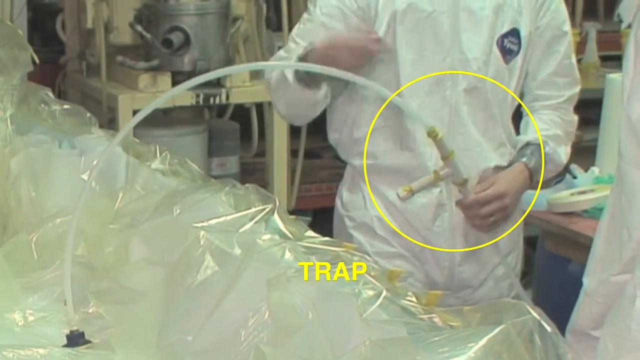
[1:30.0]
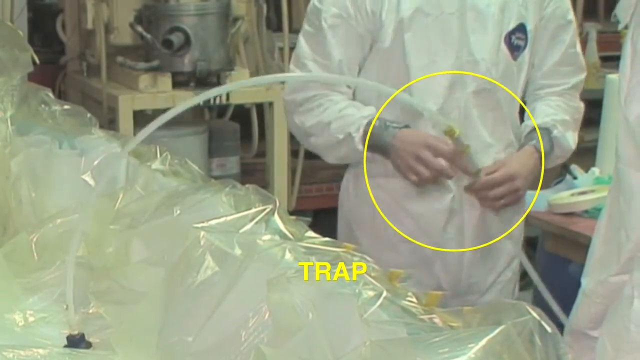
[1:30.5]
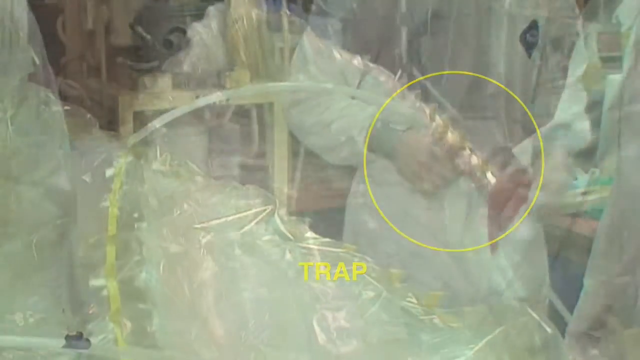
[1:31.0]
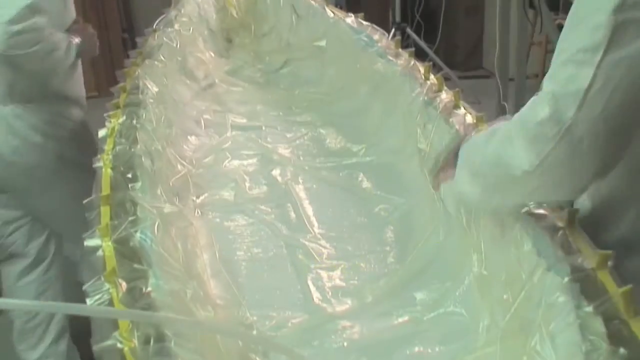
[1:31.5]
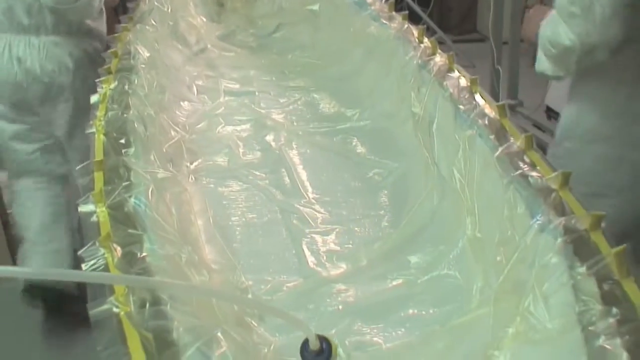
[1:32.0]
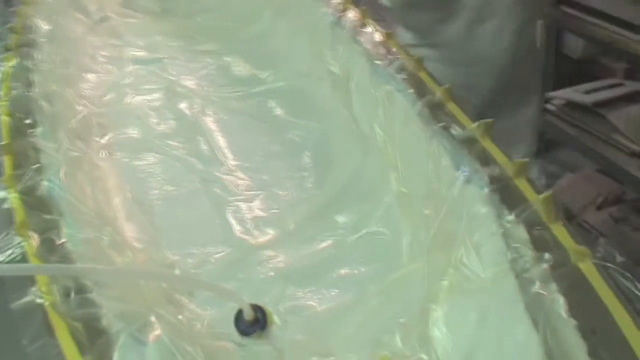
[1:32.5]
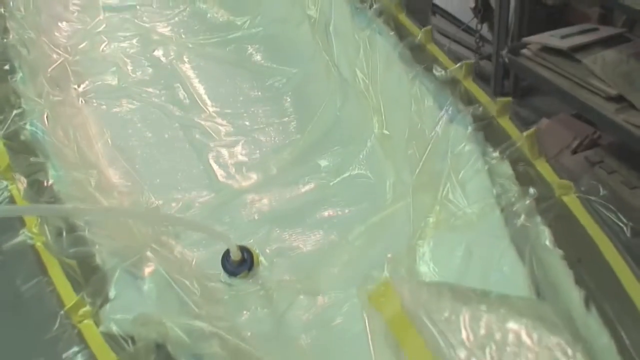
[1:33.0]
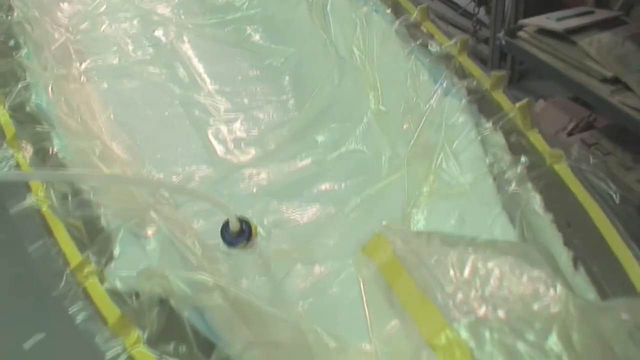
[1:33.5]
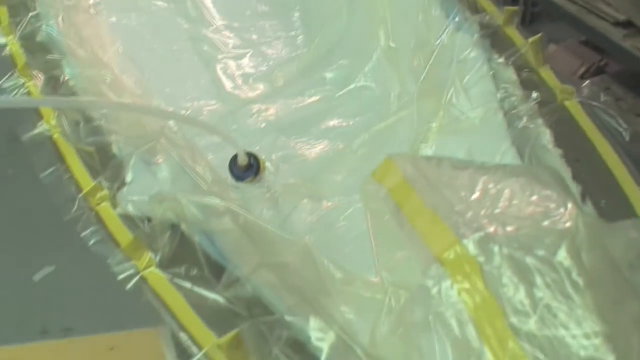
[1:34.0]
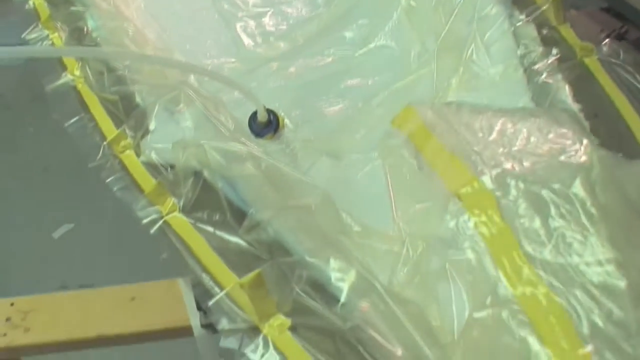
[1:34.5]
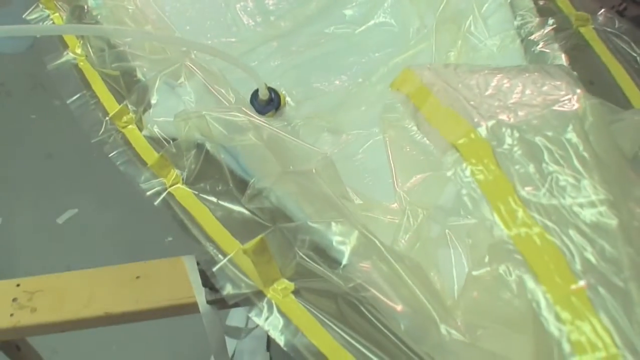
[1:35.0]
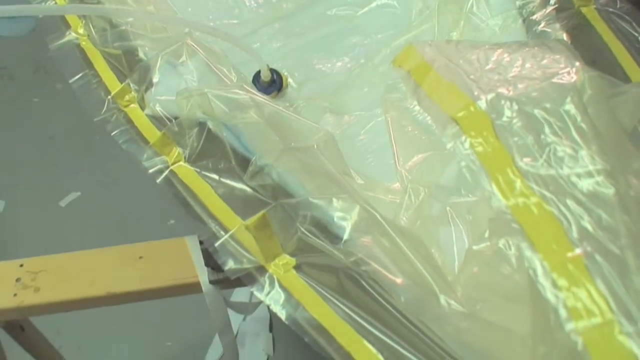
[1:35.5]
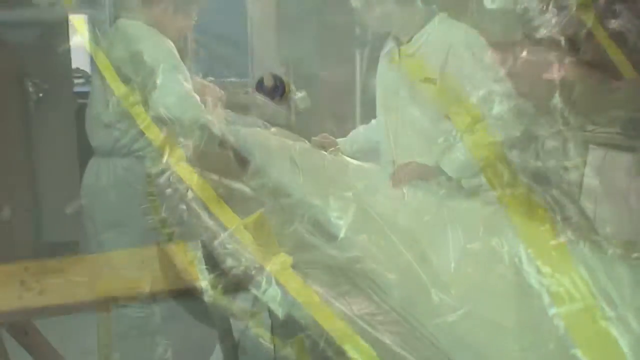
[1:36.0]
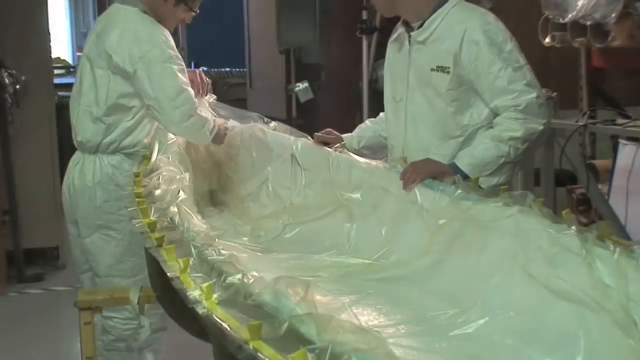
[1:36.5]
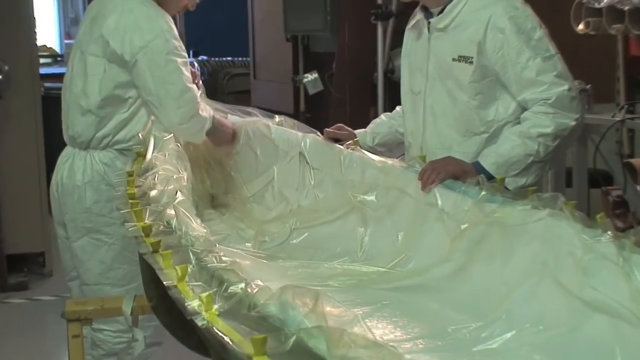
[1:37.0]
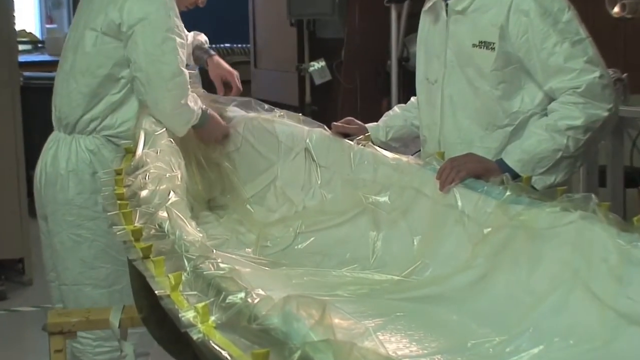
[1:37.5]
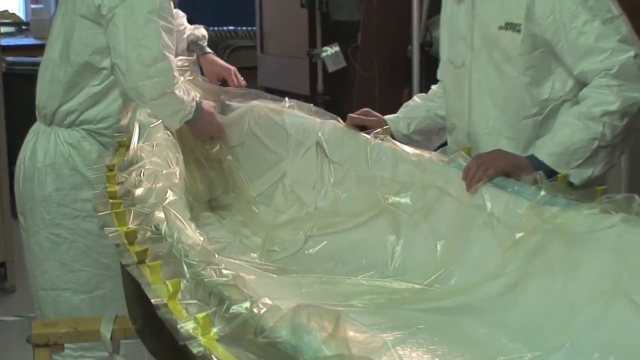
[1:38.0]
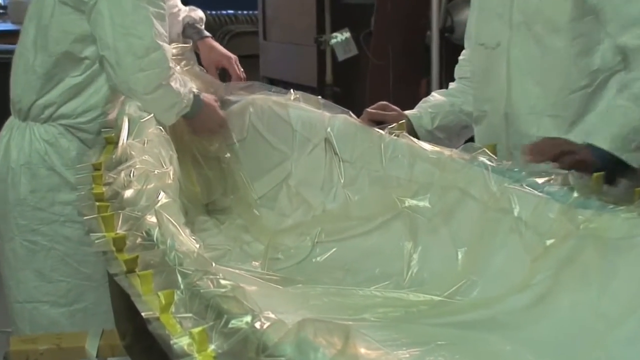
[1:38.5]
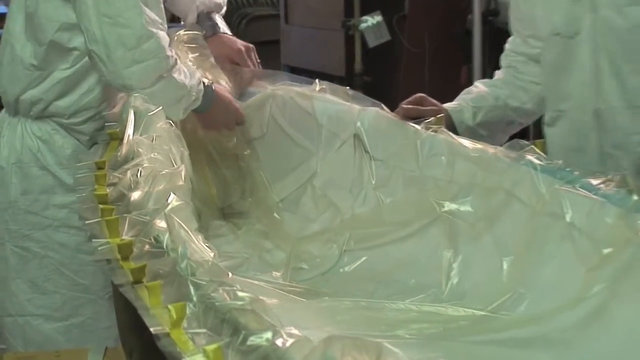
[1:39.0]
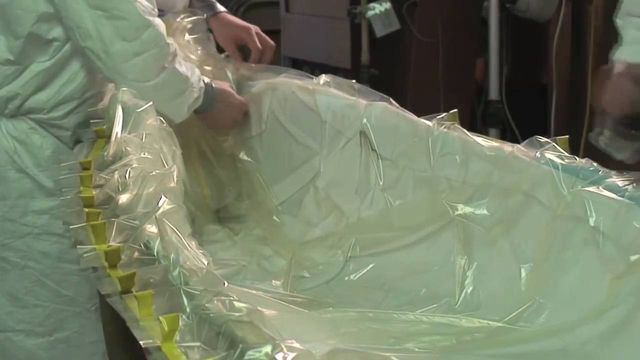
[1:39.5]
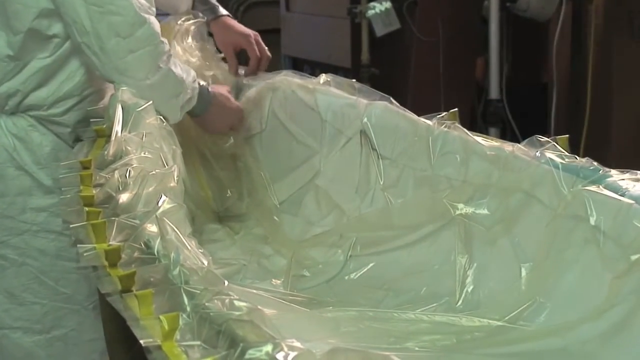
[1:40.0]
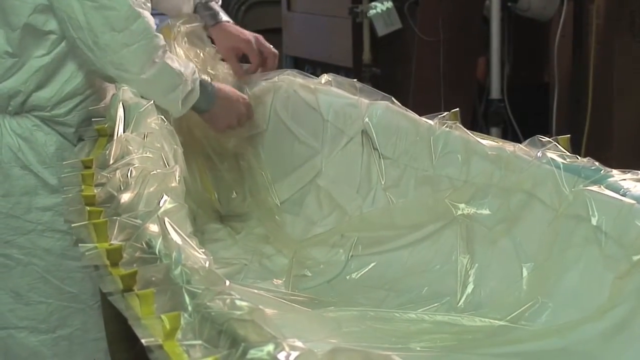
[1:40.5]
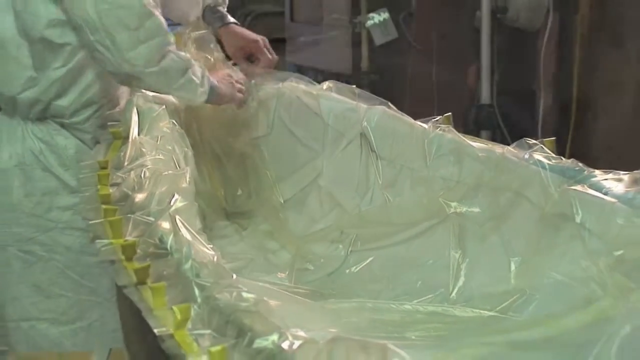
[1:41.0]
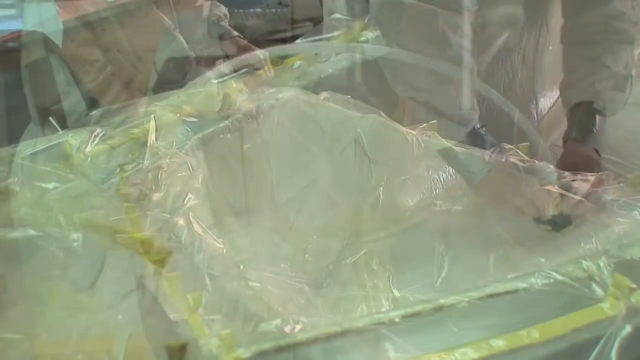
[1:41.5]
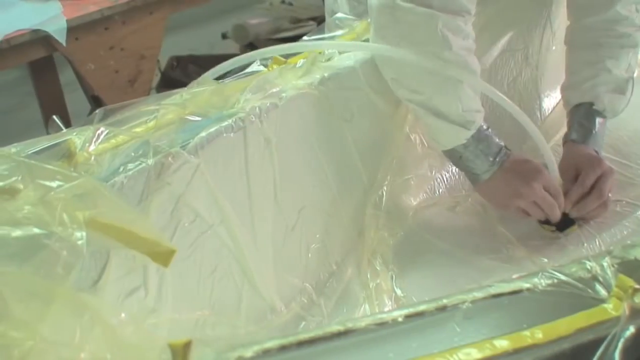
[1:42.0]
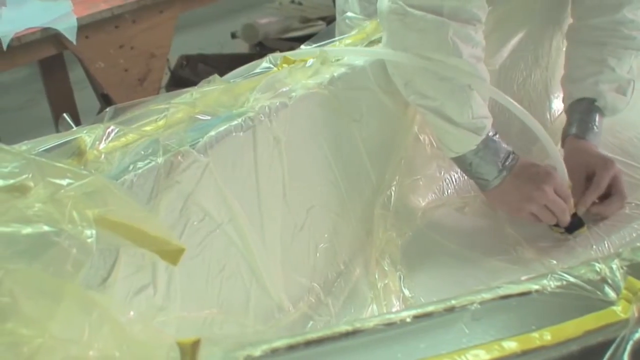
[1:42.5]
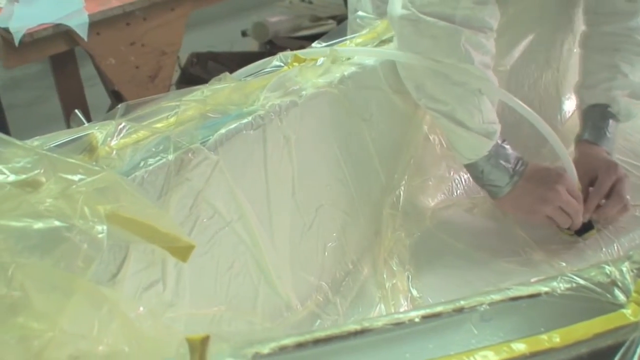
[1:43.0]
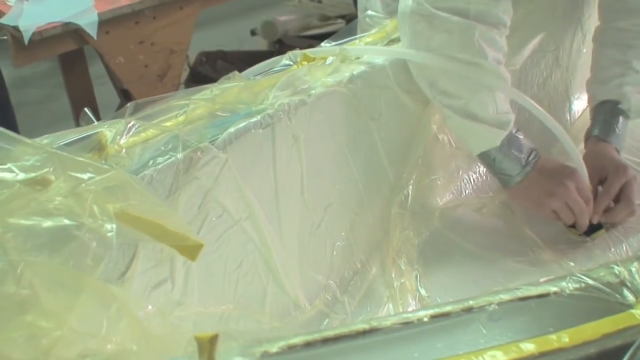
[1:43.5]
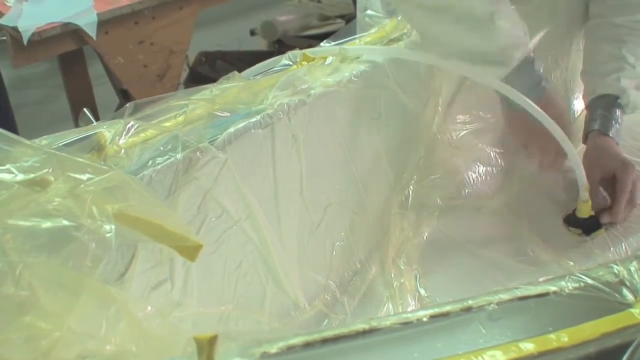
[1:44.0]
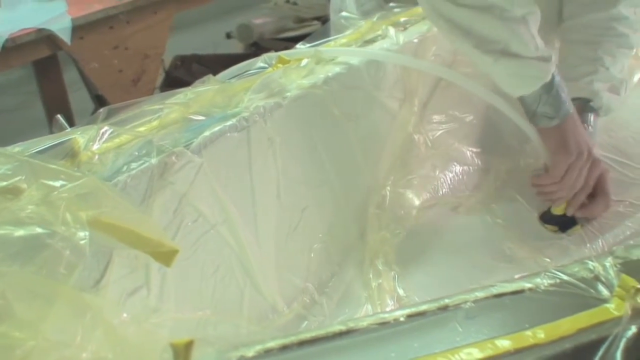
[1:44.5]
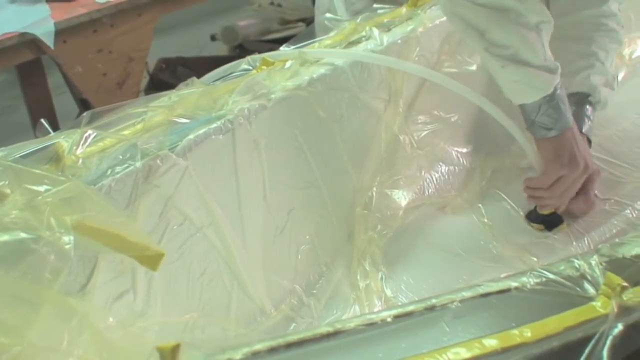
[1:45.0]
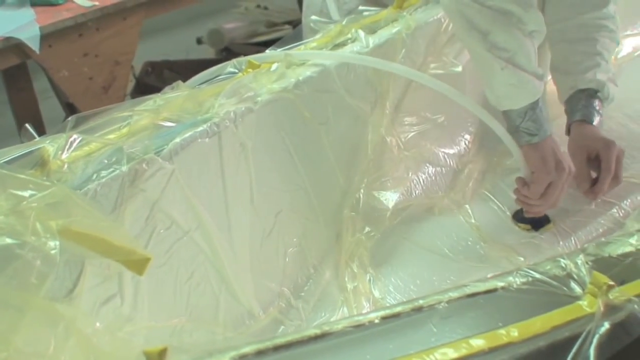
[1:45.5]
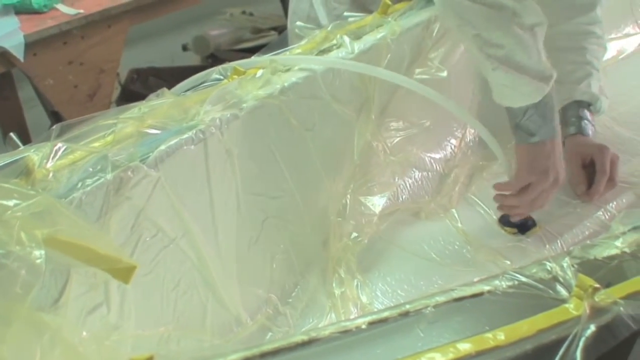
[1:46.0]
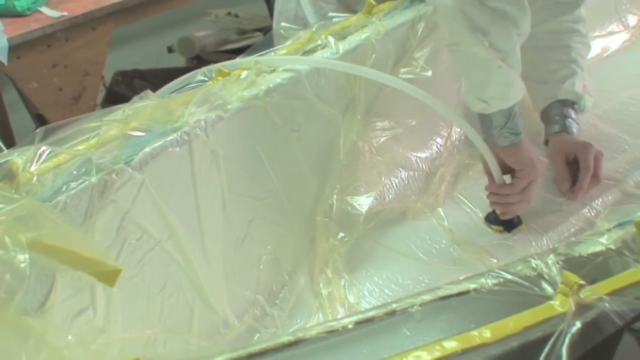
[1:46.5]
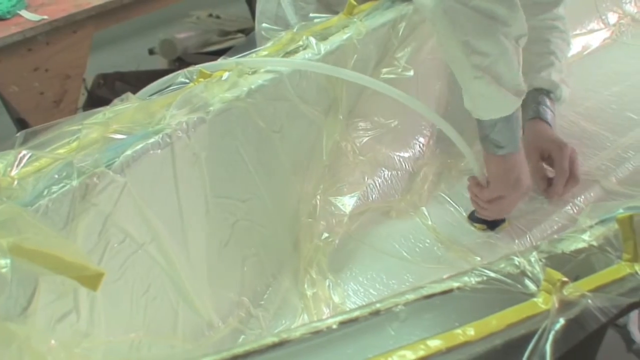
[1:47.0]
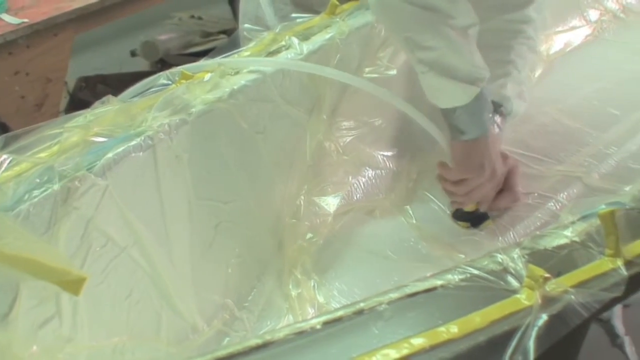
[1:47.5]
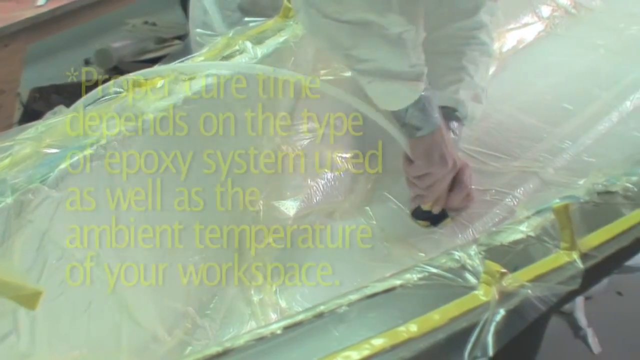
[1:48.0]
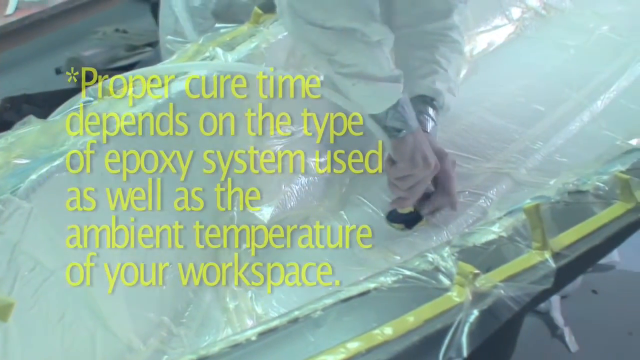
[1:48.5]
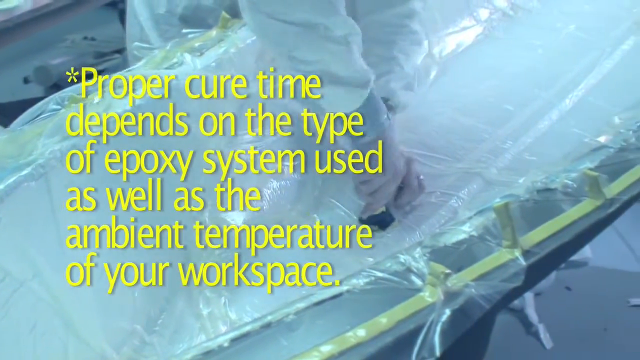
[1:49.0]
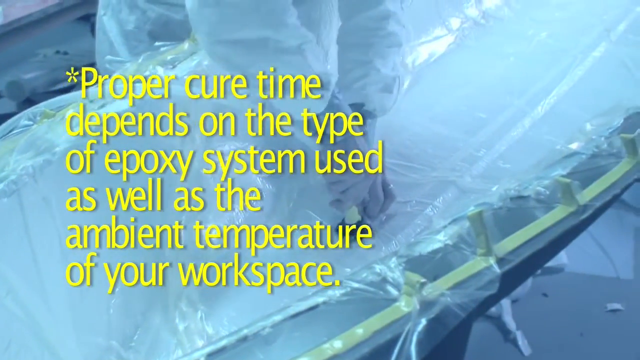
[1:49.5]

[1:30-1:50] The men continue assembling the pipe they inserted in the middle of the canoe. The canoe is white and covered in plastic film, with the yellow tape the men put on earlier along its sides. One of the men makes some adjustments at the entry port of the pipe inside the canoe. On the left side are the words in yellow "proper cure time depends on the type of epoxy system used as well as the ambient temperature of your workspace". The indoor setting has a good amount of artificial light, and the video is in a rectangular shape.